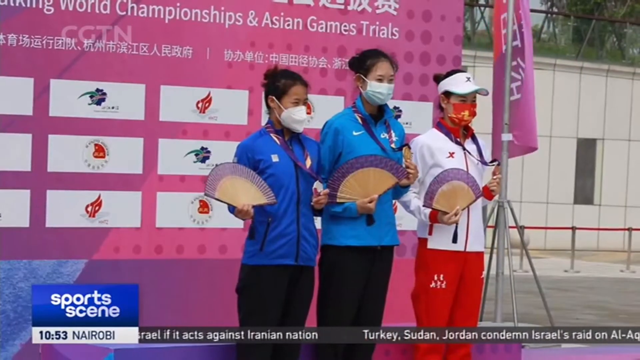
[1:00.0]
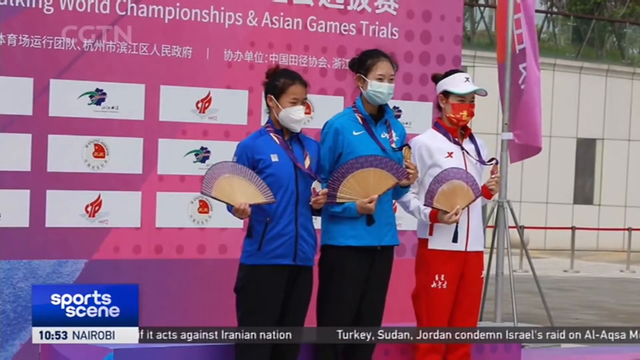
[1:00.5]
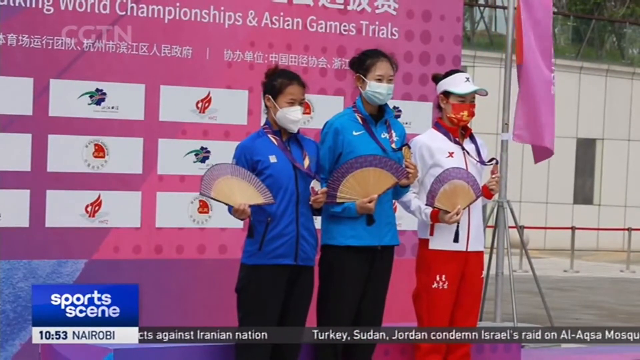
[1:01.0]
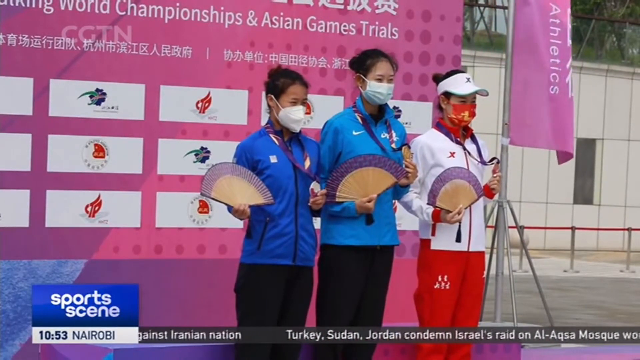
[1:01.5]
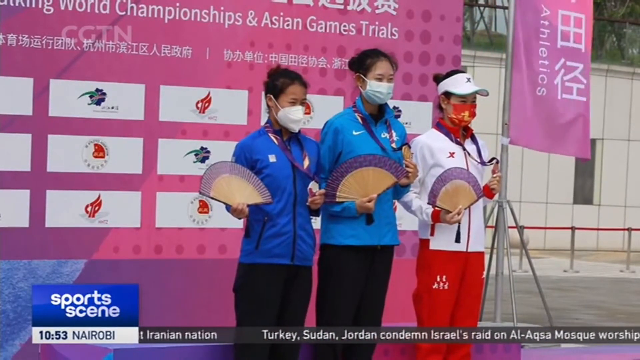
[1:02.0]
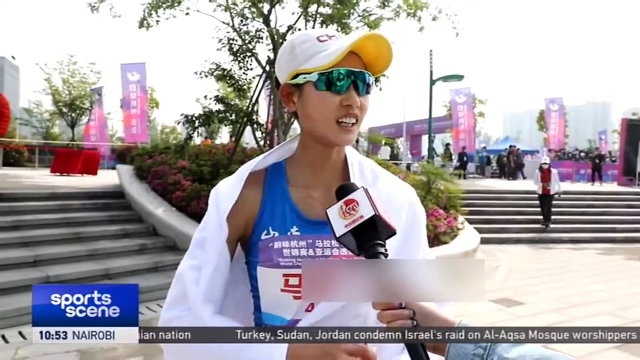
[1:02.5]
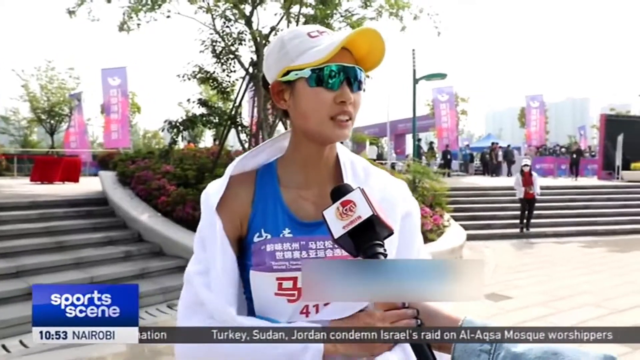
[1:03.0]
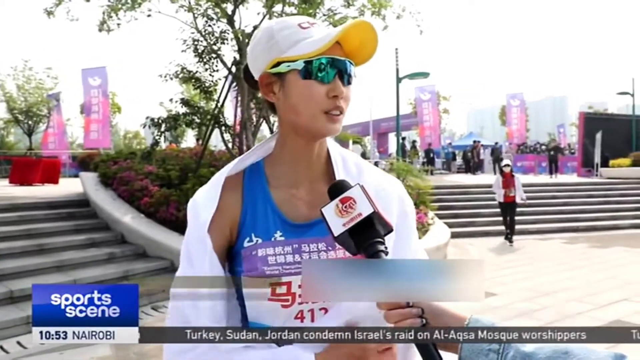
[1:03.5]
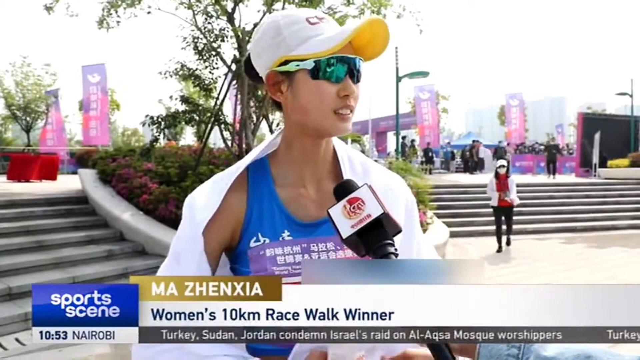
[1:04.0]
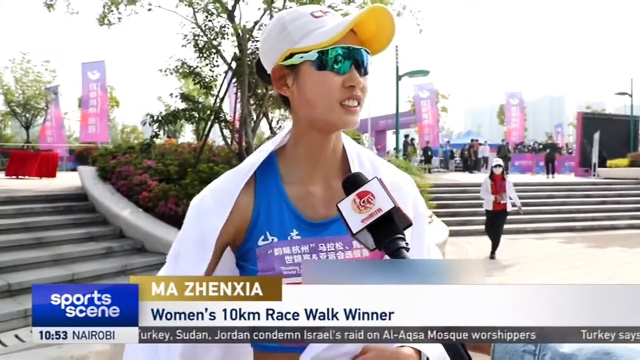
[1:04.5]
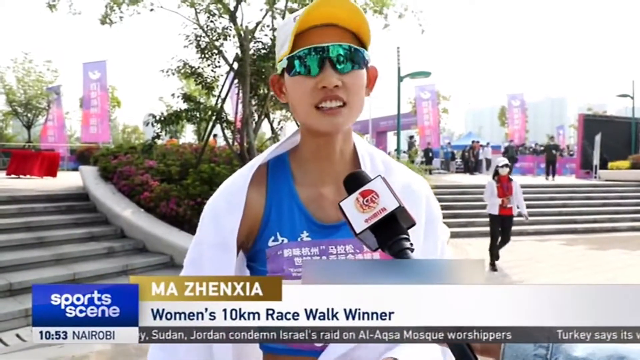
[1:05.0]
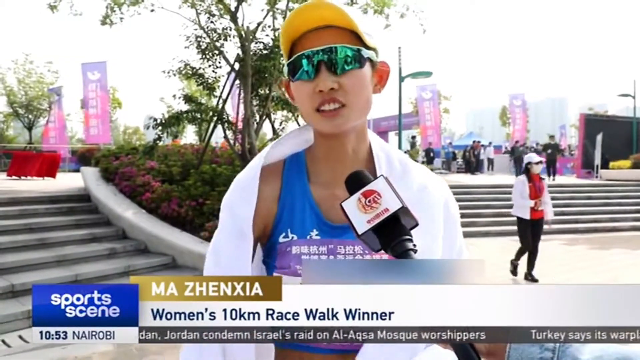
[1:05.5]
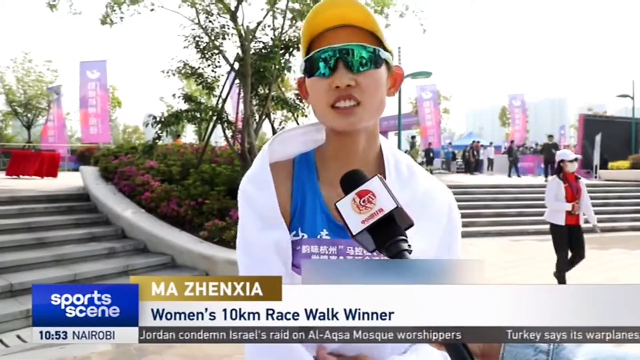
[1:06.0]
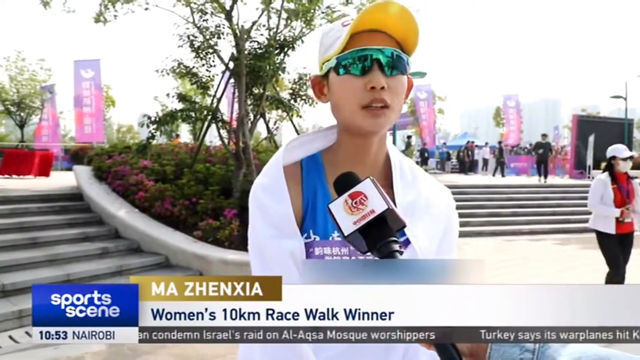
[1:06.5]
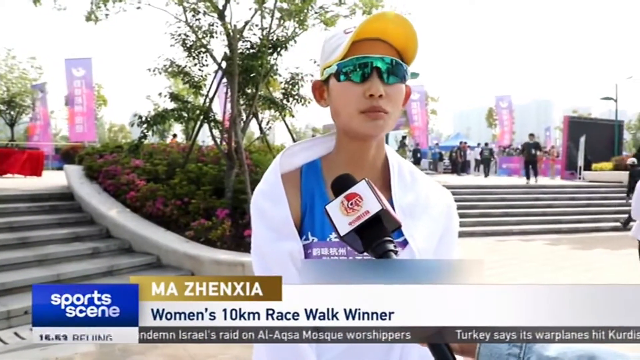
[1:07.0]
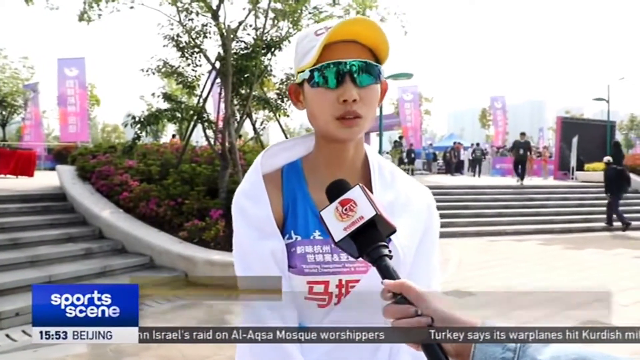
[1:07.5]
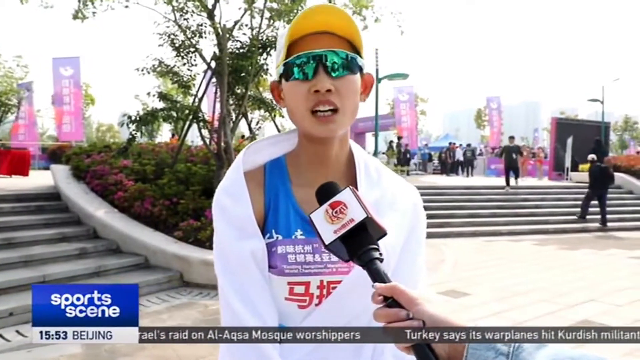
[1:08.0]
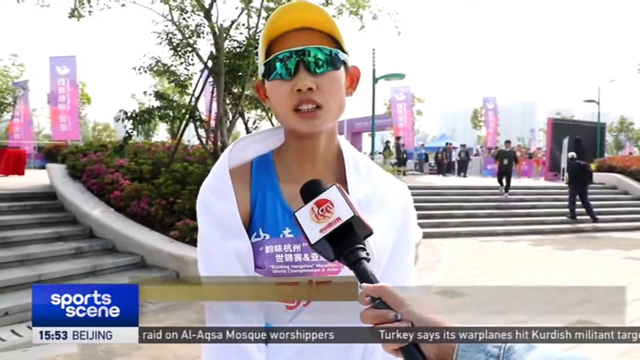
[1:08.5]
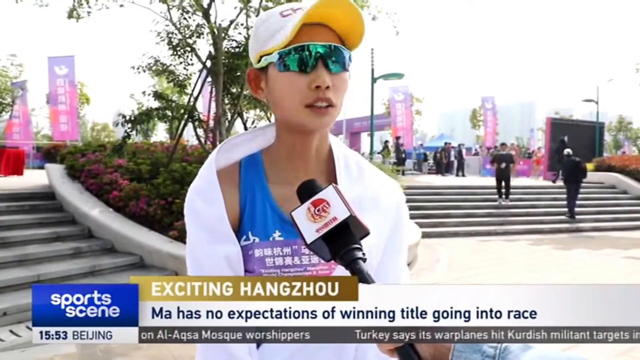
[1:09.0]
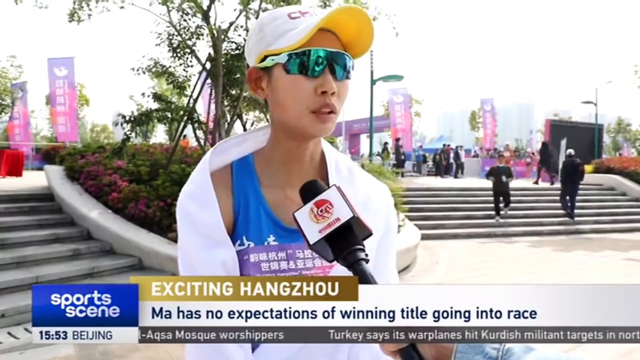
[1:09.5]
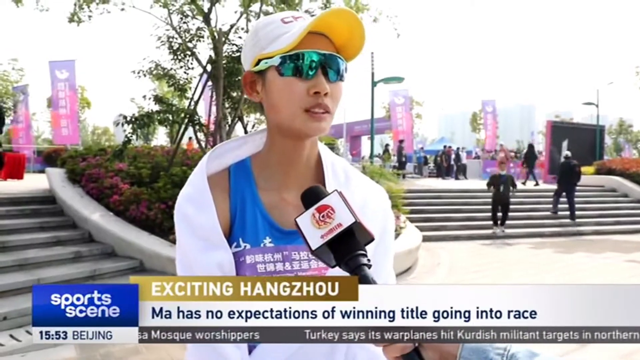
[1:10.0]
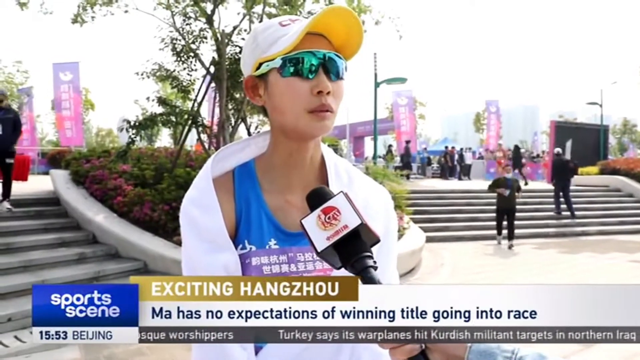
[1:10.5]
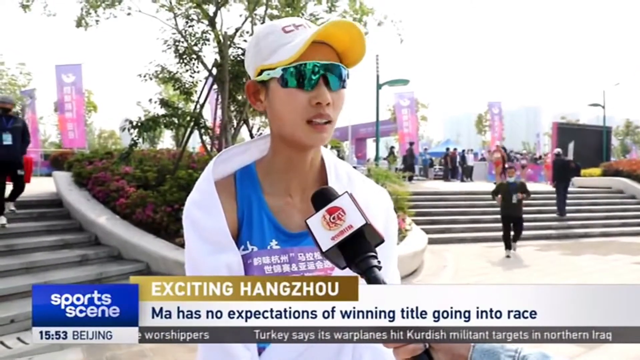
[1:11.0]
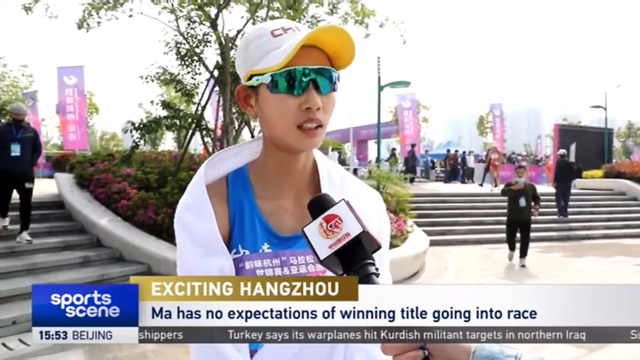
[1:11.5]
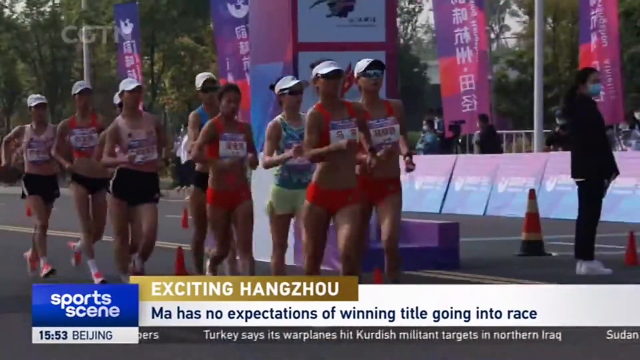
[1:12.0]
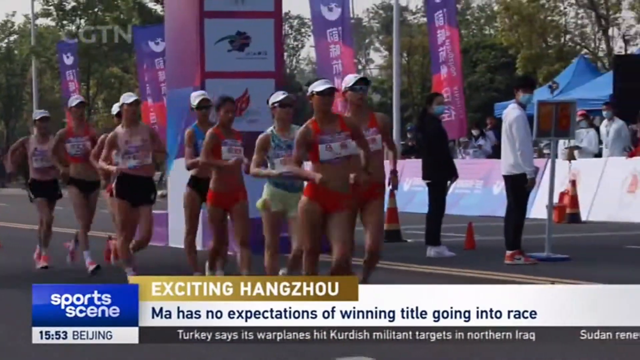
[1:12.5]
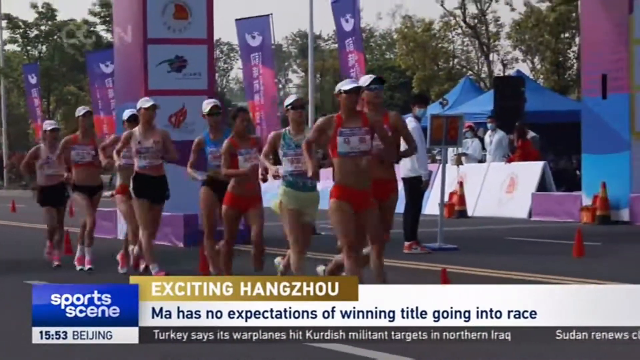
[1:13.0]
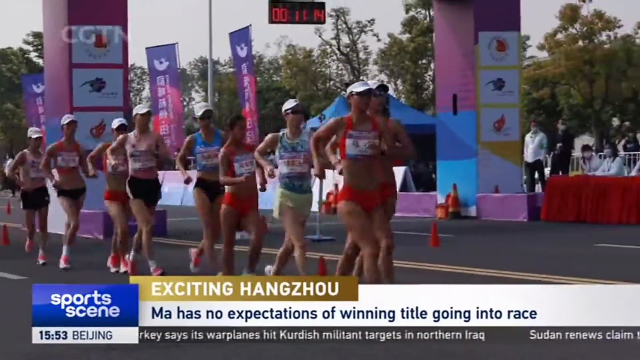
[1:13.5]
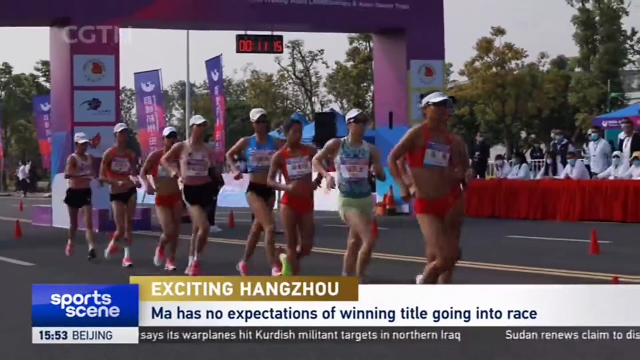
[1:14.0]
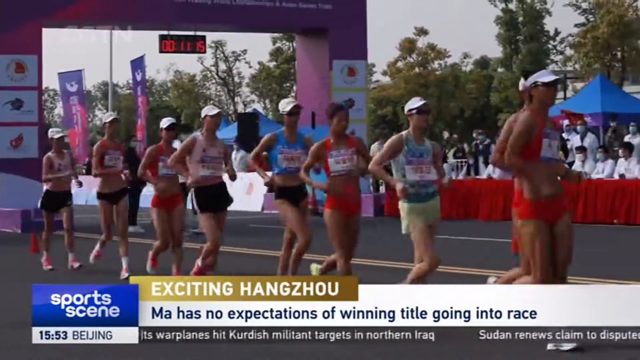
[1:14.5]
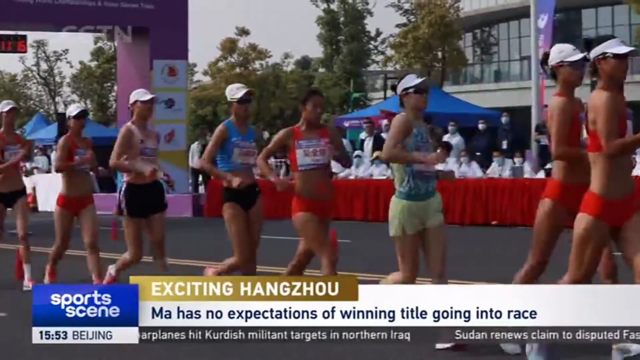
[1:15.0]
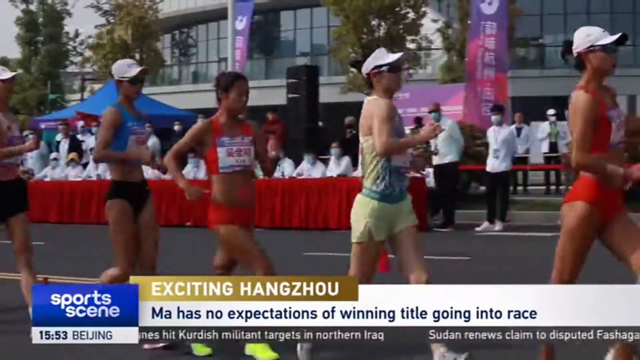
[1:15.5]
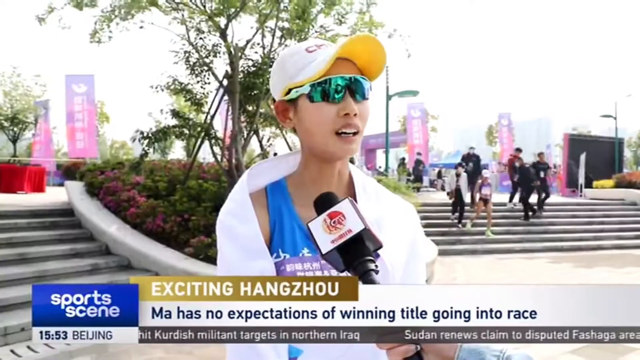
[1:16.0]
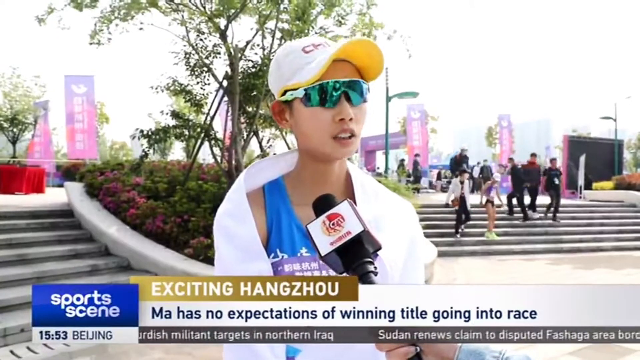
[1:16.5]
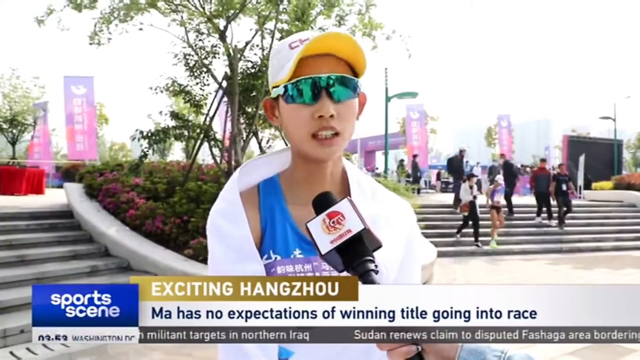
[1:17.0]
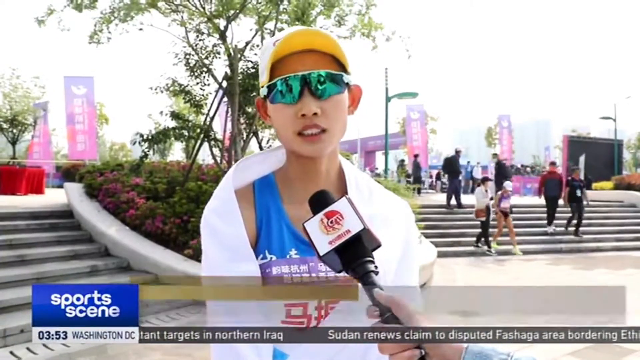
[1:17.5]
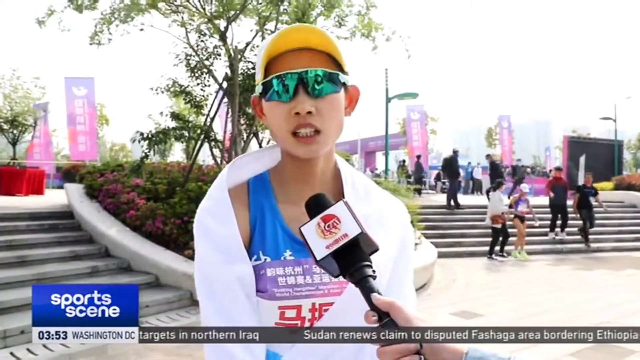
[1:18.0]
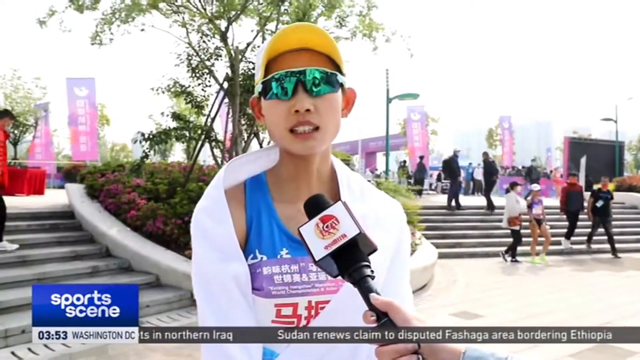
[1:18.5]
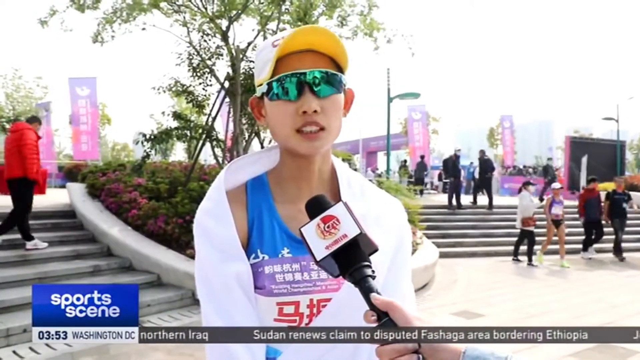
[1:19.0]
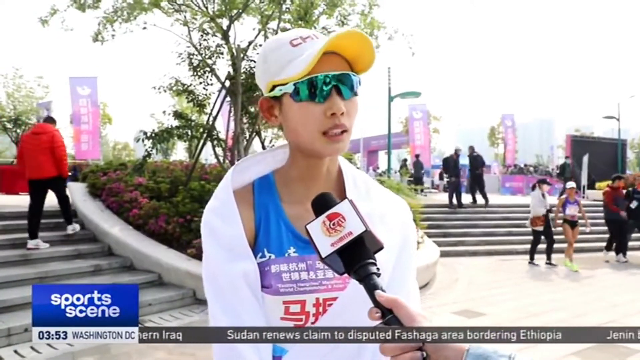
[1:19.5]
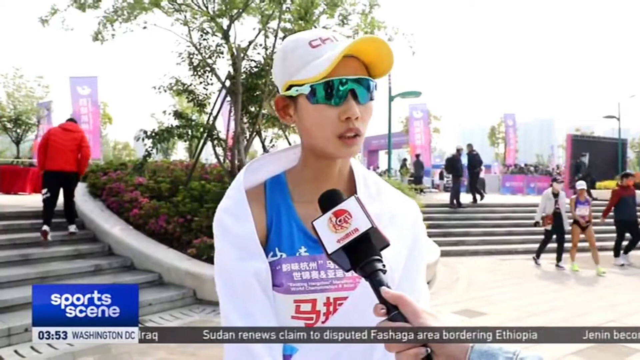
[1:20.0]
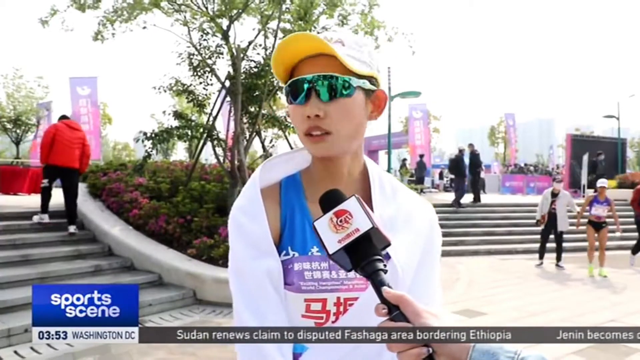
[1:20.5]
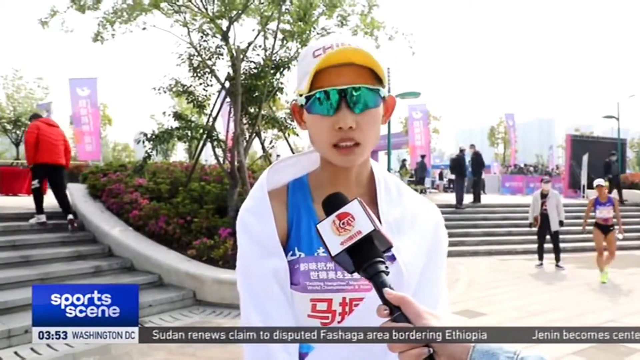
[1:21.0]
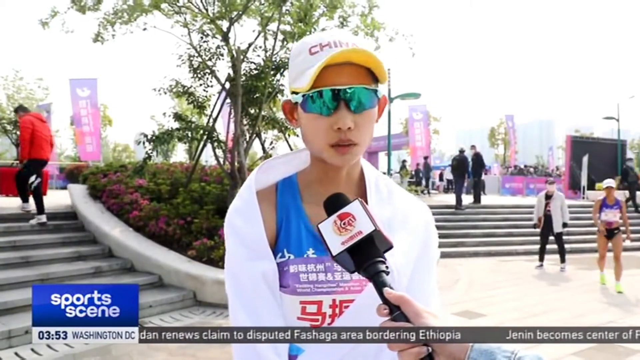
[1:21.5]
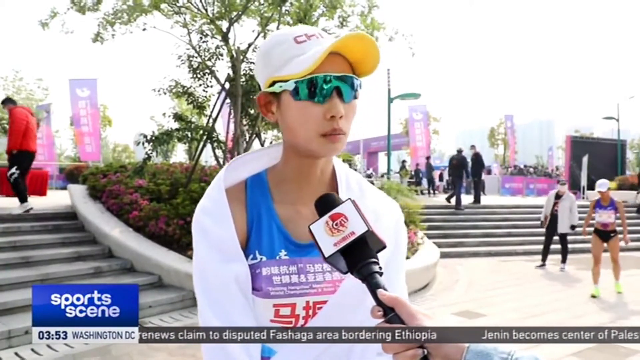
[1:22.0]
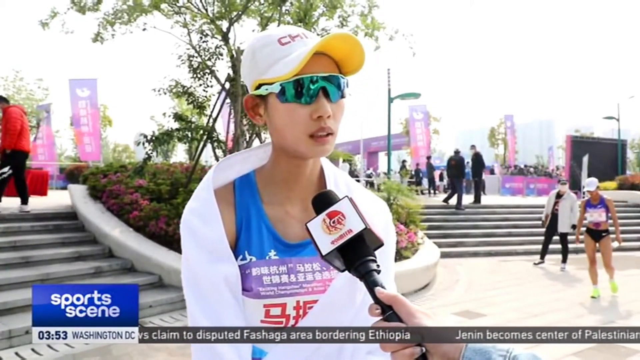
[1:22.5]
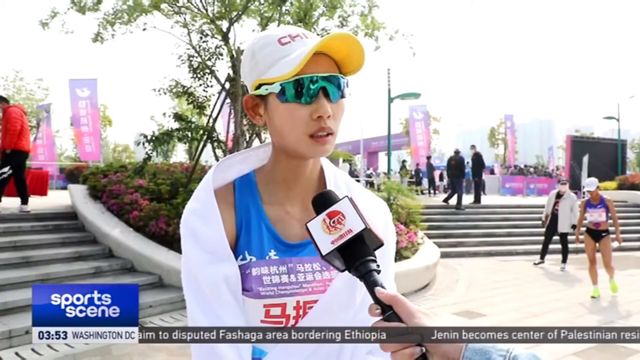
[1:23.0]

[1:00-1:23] A reporter interviews the woman who won the race. She wears a blue tank top, sunglasses, and a white hat with a yellow brim. Behind her are two staircases, some trees and flowers, and a sky that looks white from the lighting. A woman in a white coat and white hat walks by. As the winner speaks into the microphone, on-screen text reads "Women's 10KM Race Walk Winner," and then changes to "Ma has no expectations of winning title going into race." The video cuts to the runners racing, then returns to Ma, who continues speaking into the microphone.